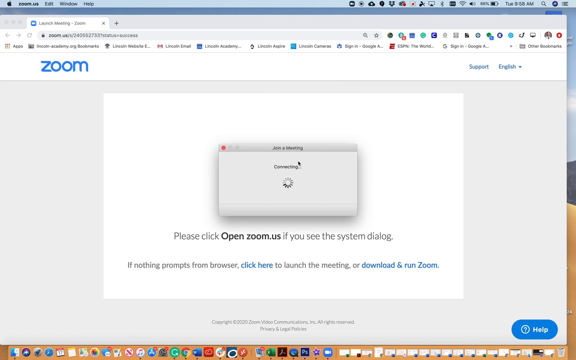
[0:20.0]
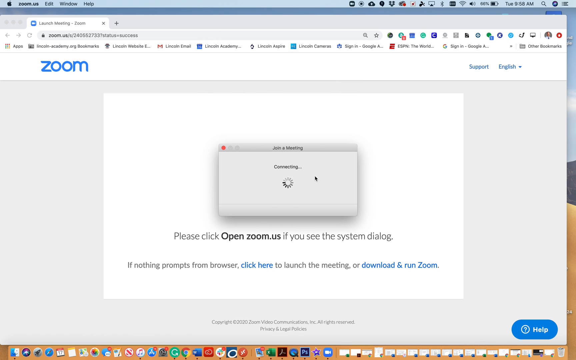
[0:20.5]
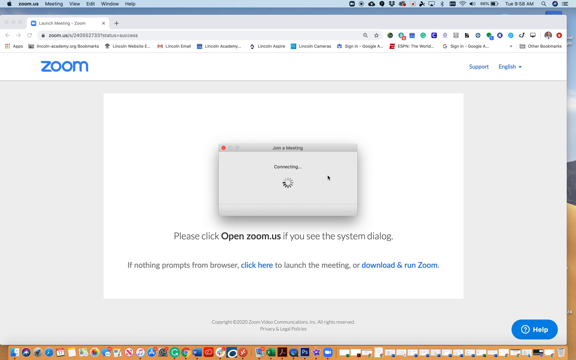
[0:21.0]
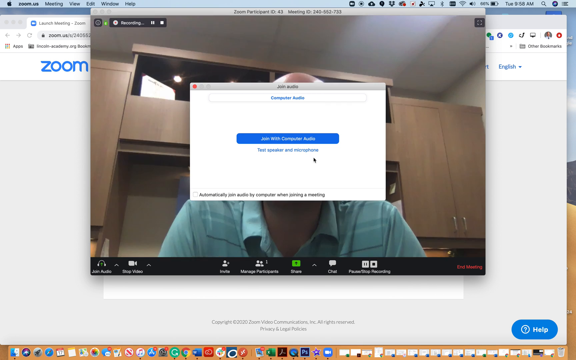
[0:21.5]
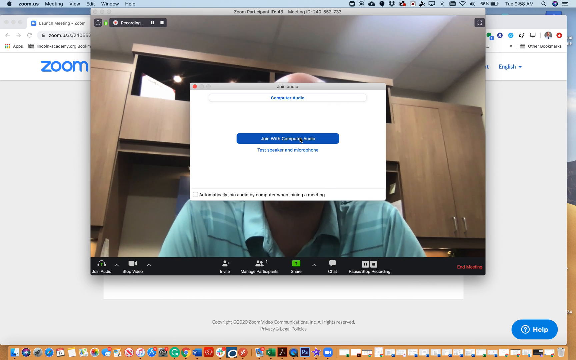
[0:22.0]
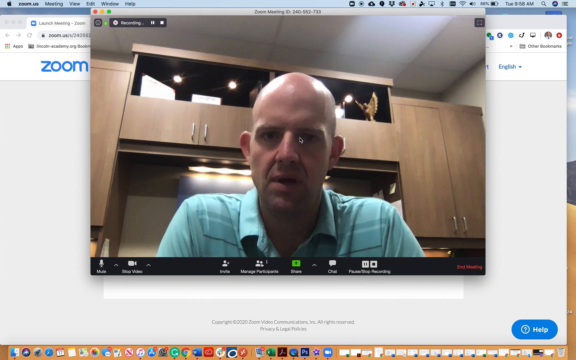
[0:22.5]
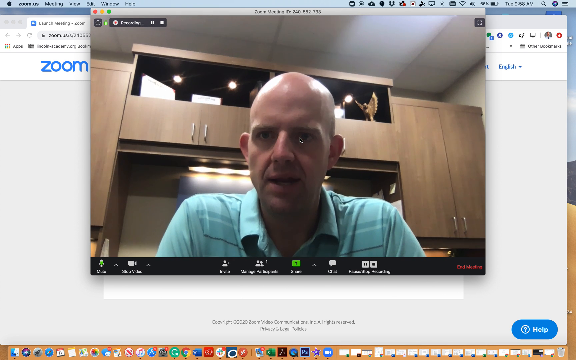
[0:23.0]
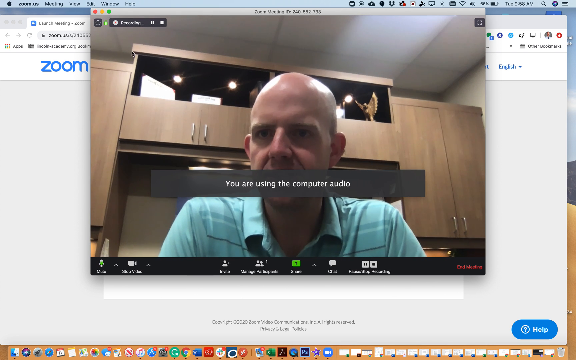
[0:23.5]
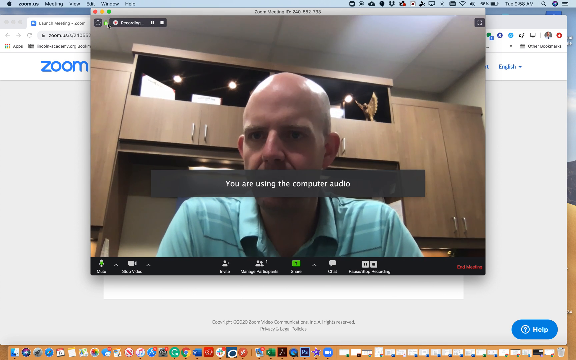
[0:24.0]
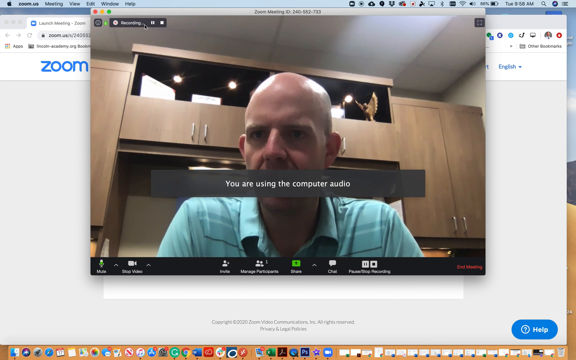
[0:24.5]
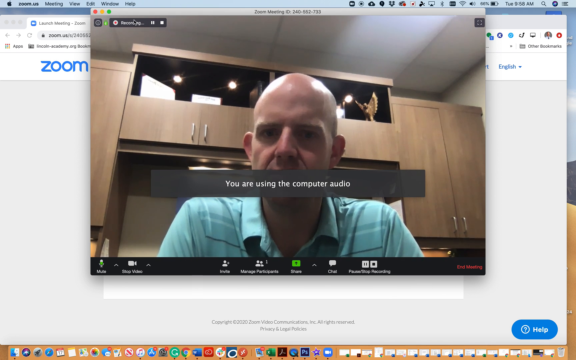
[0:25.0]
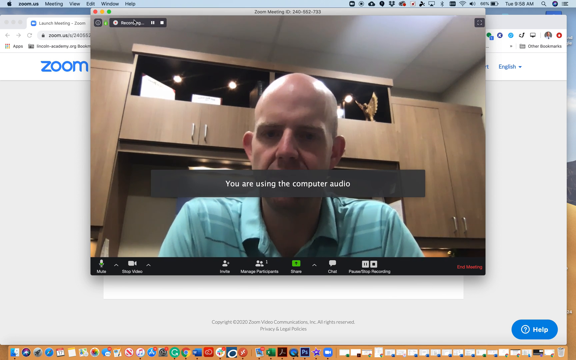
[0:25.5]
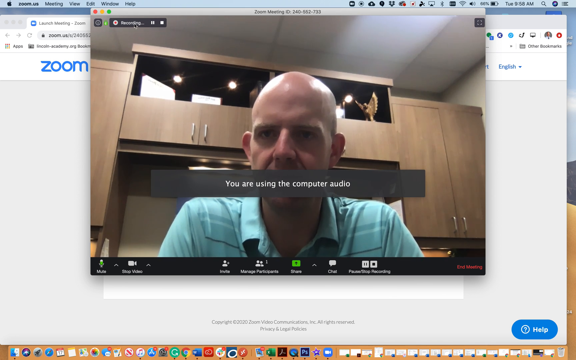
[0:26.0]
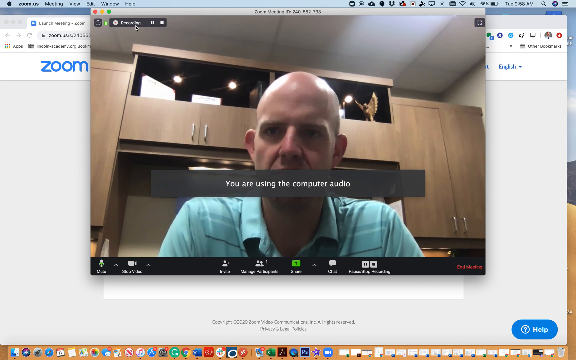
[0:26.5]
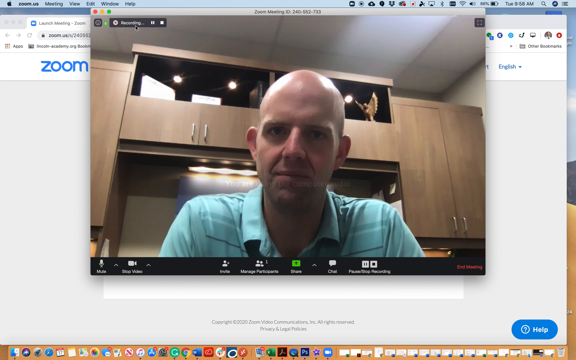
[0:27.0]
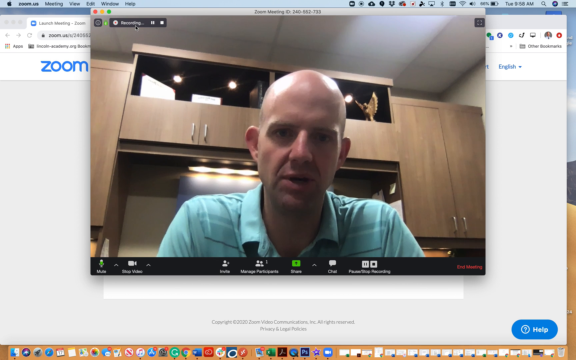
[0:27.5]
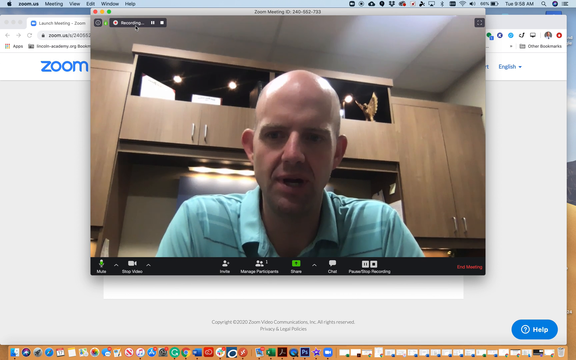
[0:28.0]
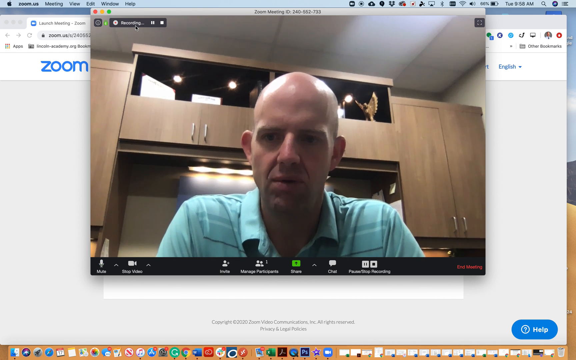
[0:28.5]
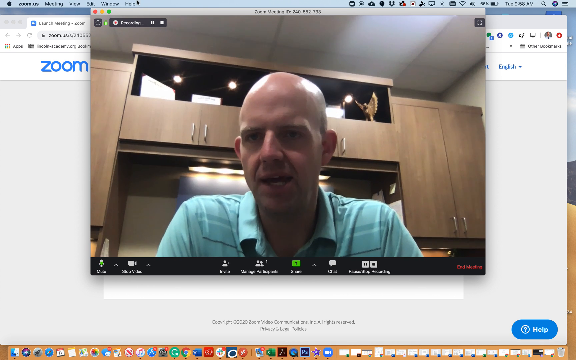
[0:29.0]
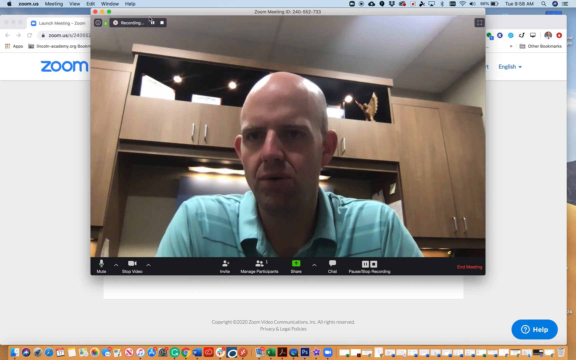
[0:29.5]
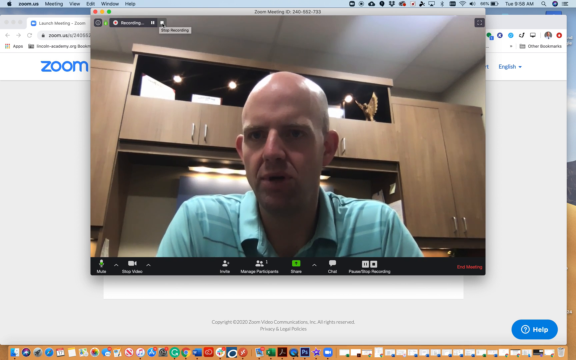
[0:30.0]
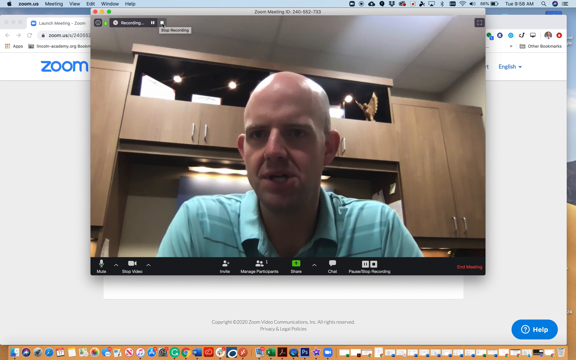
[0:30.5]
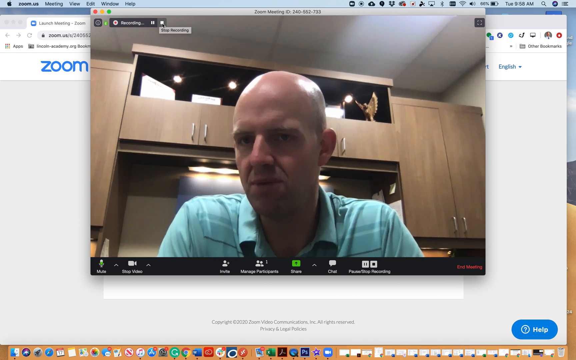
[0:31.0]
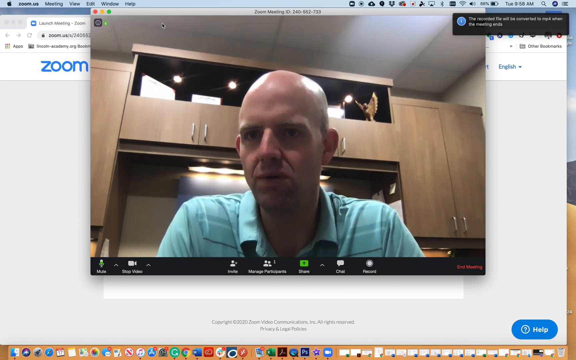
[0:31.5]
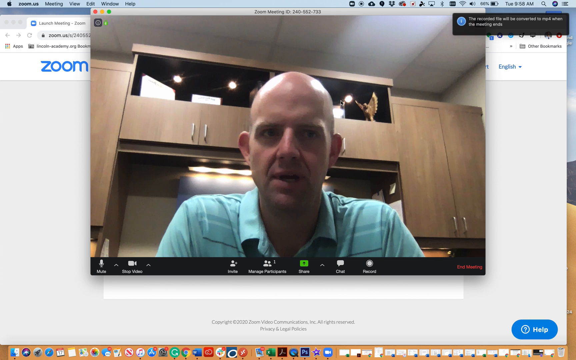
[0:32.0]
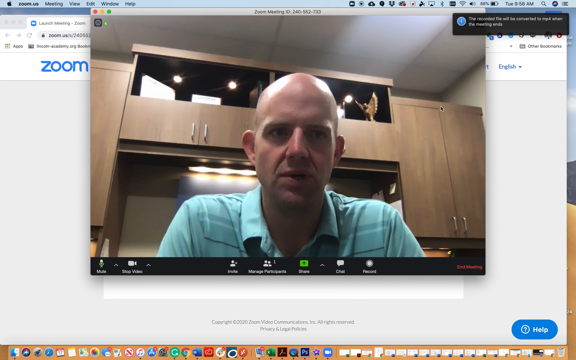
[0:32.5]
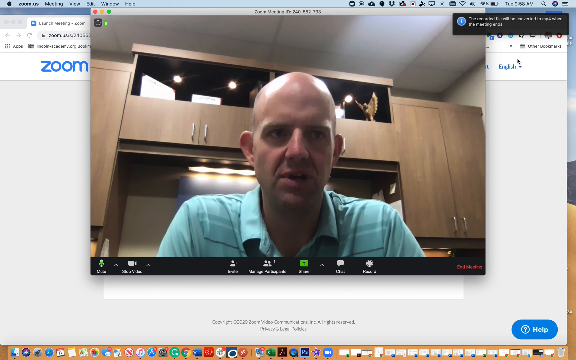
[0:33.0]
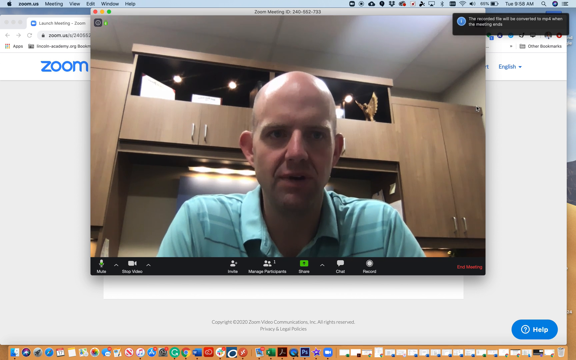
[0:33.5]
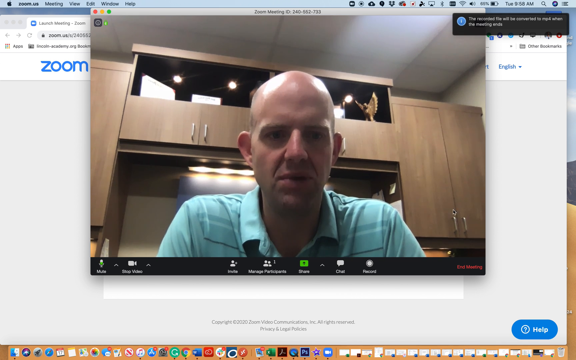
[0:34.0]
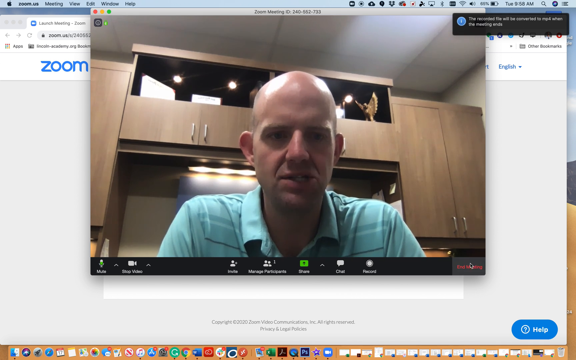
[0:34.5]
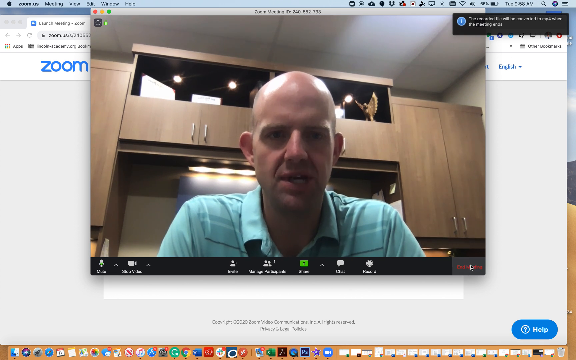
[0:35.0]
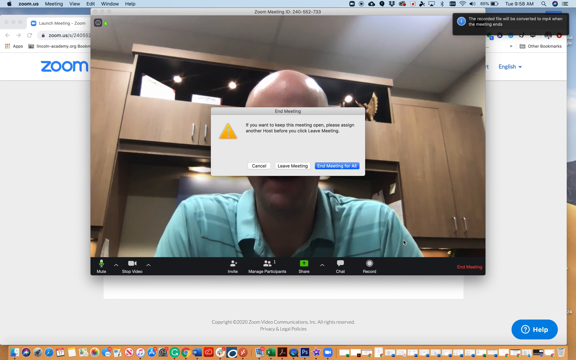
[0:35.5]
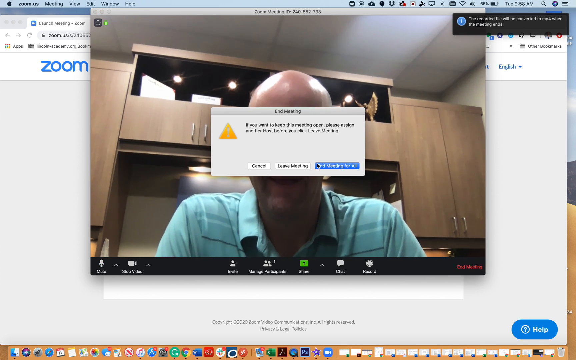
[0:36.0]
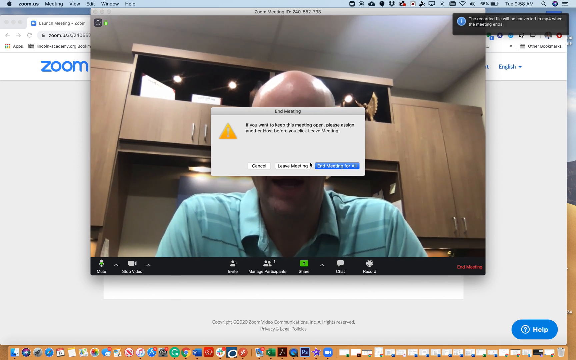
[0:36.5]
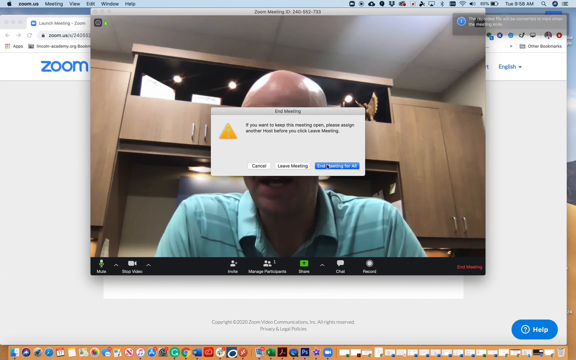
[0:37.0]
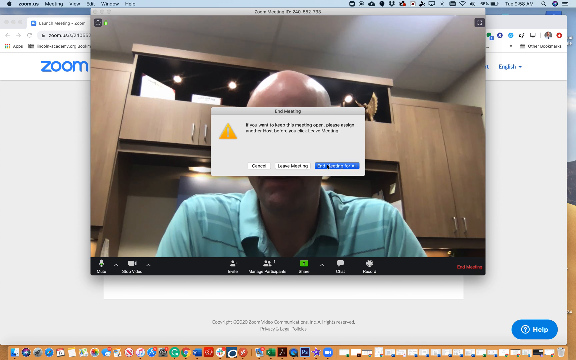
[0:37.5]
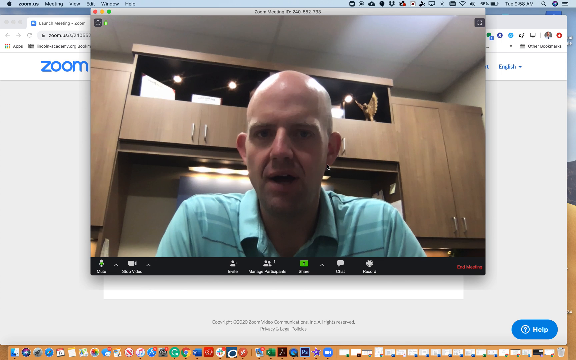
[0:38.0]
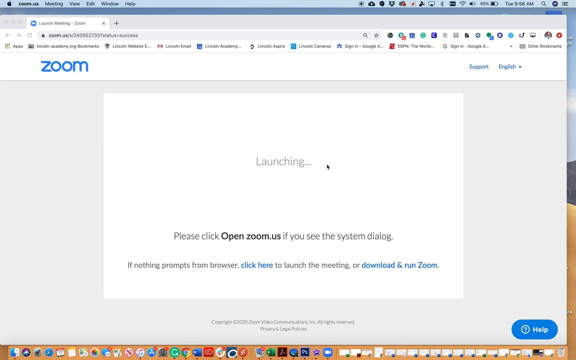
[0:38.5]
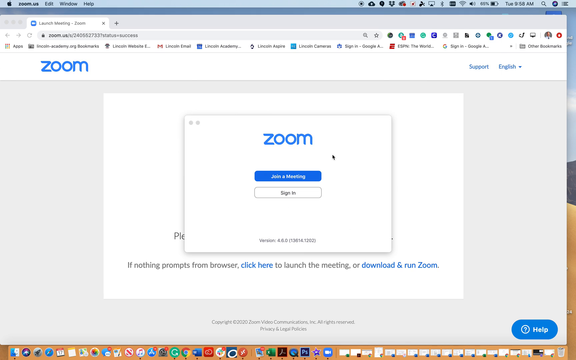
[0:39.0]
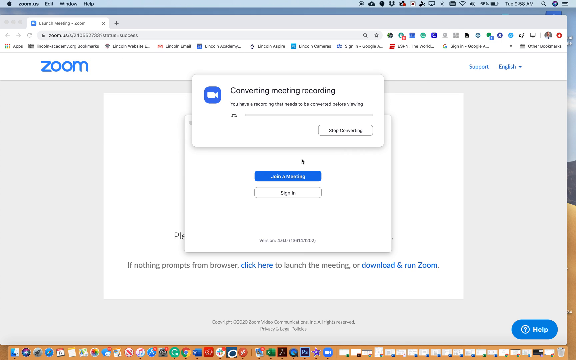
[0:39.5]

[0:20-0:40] The Zoom launch meeting screen appears, showing "connecting" with a circle underneath. Below the join a meeting box, text reads "please click open zoom.us if you see the system dialog. If nothing prompts from browser, click here to launch the meeting or download and run zoom." A blue help button is at the bottom right of the screen. After a transition, a screenshot of a Zoom meeting appears. The user, Jake Hunt, is a bald white man in his 40s wearing a blue golf shirt. A rectangular dialog box with white letters appears reading "You are using the computer audio." Jake Hunt is speaking. He clicks stop recording, then clicks a red button at the bottom of the Zoom dialog box that says "End Meeting." An End Meeting confirmation box appears, and he chooses to end the meeting. He returns to a white dialog box with "zoom" in blue letters, a blue button with white letters reading "join a meeting," and below it a white rectangular box that says "sign in." An overlay box then appears with a blue square containing a white camera, the word "converting" in black letters, the text "You have a recording that needs to be converted before viewing," a progress bar at zero percent, and a rectangle that says "stop converting."